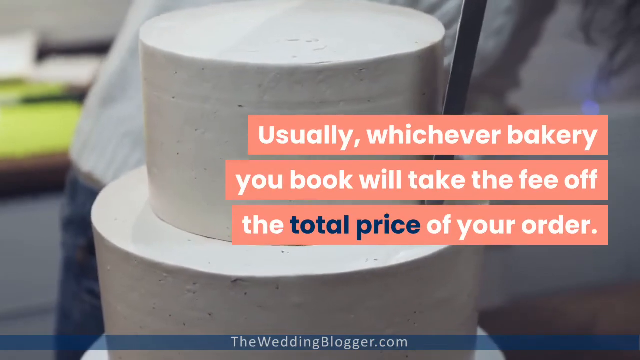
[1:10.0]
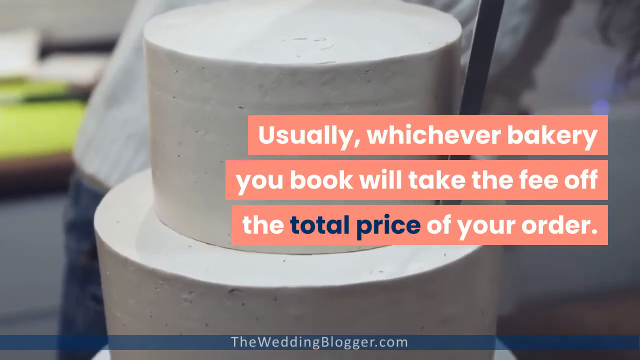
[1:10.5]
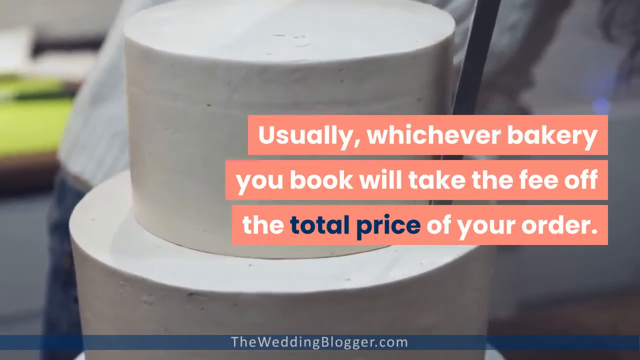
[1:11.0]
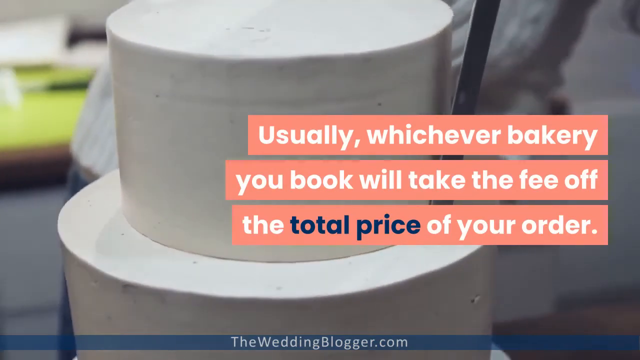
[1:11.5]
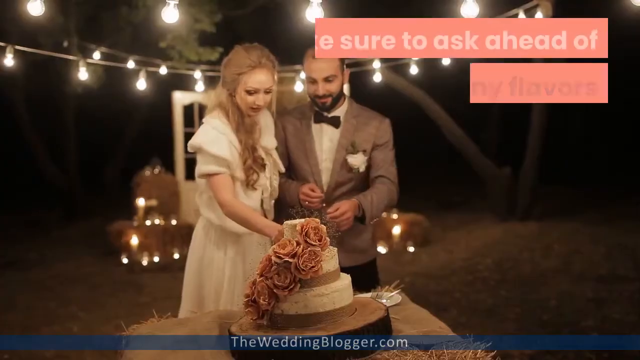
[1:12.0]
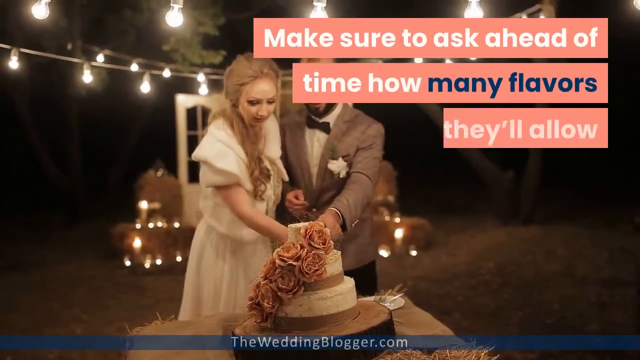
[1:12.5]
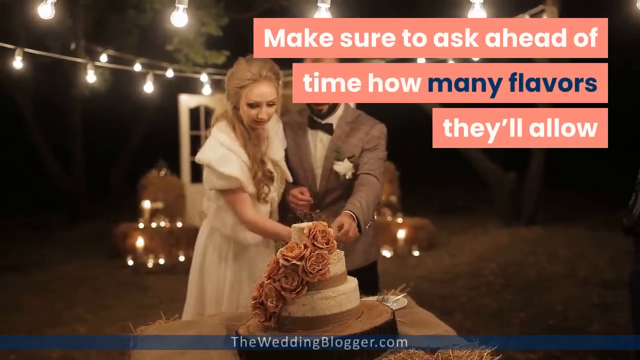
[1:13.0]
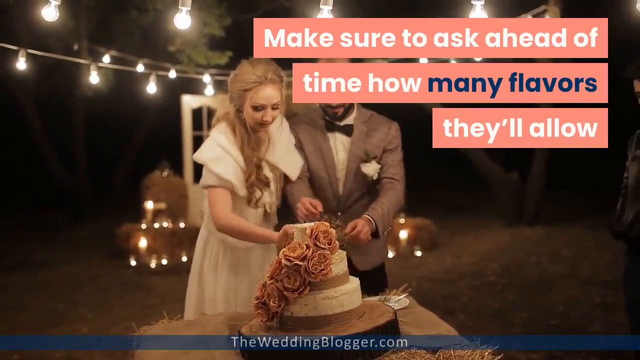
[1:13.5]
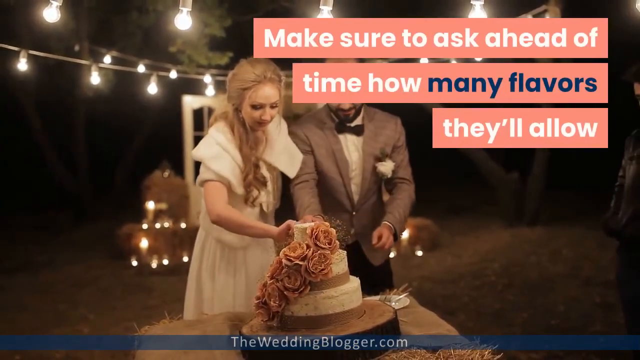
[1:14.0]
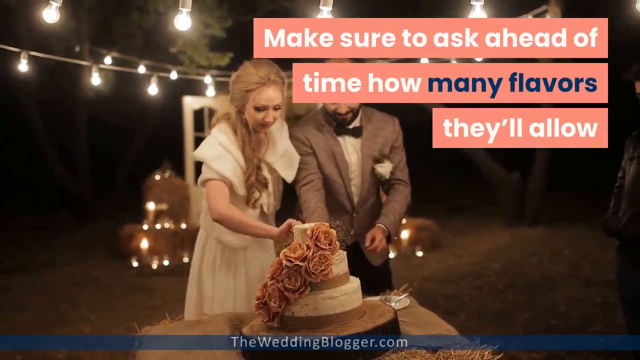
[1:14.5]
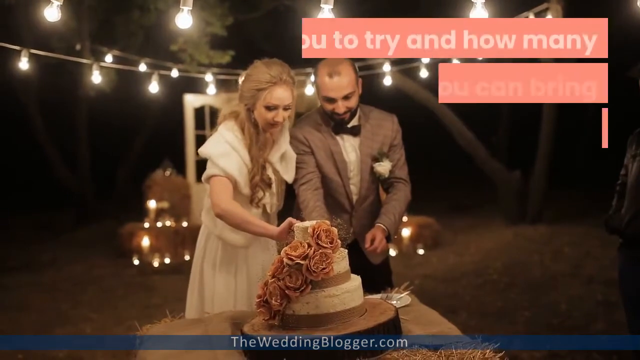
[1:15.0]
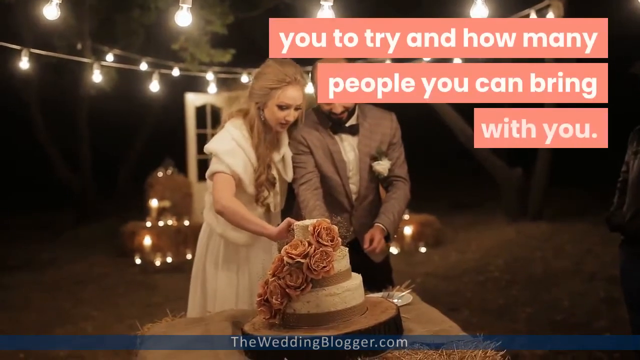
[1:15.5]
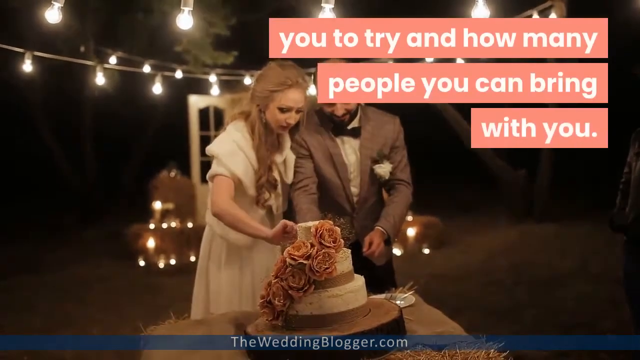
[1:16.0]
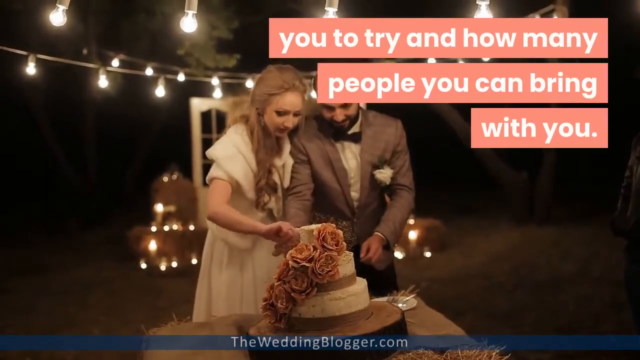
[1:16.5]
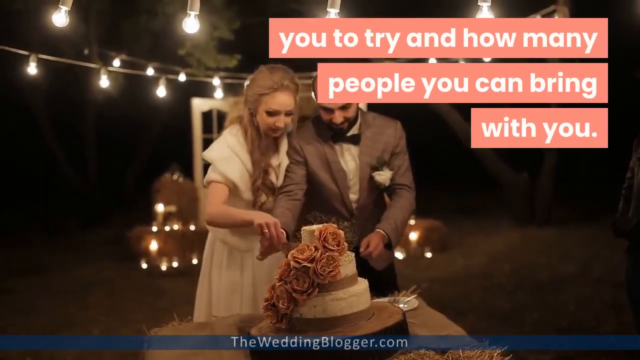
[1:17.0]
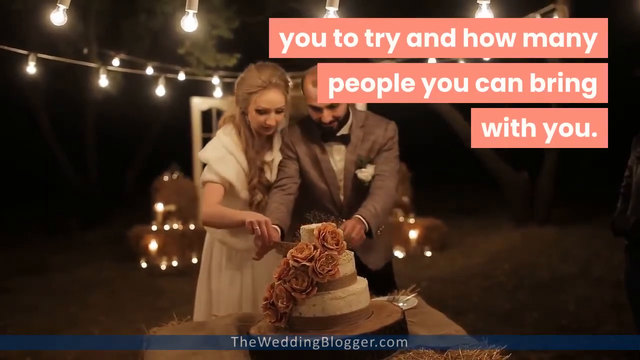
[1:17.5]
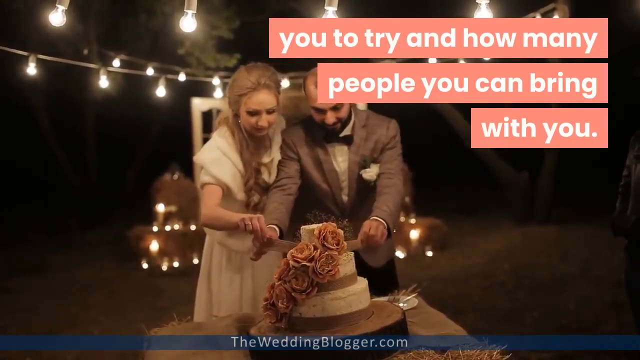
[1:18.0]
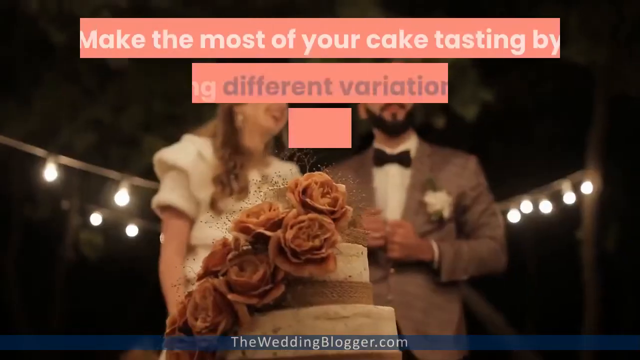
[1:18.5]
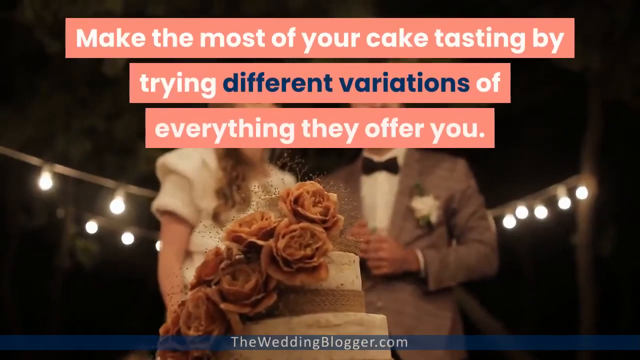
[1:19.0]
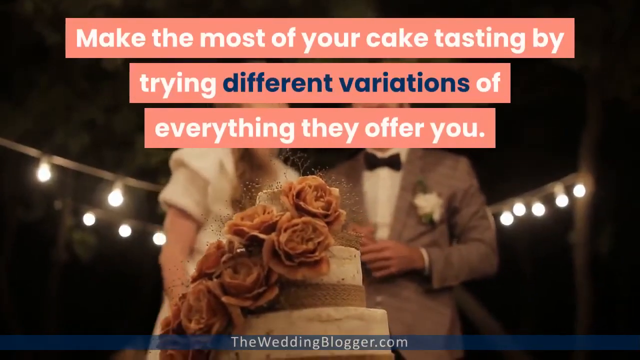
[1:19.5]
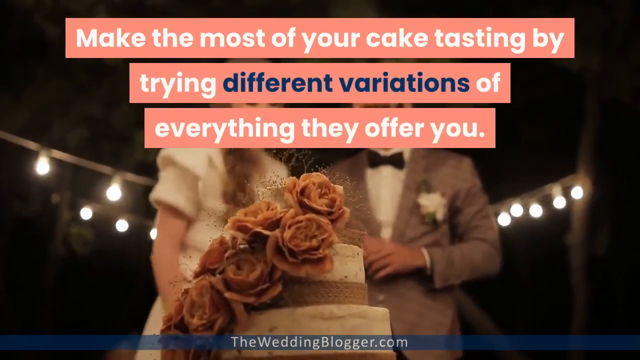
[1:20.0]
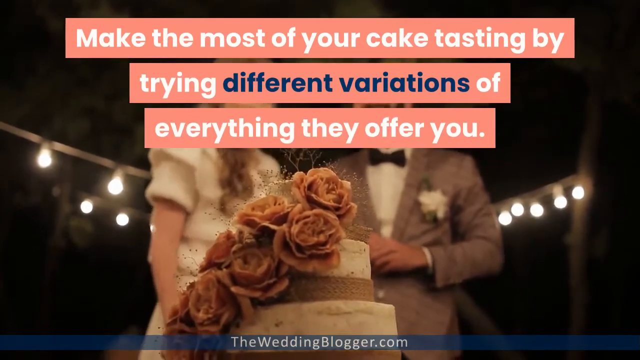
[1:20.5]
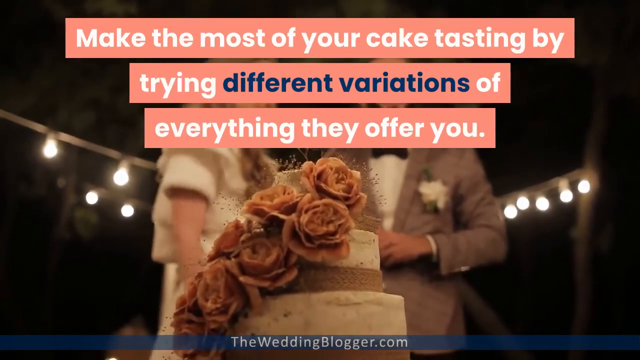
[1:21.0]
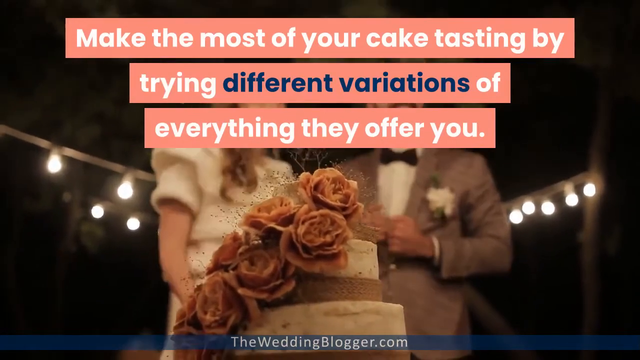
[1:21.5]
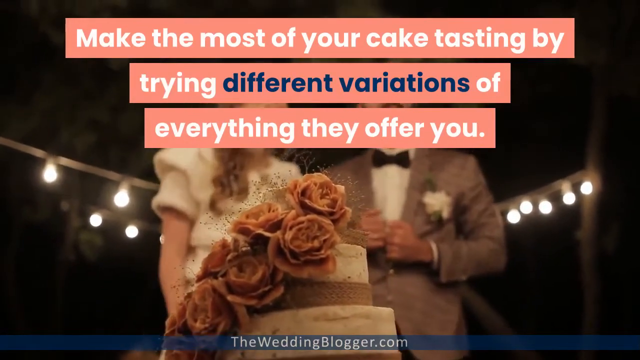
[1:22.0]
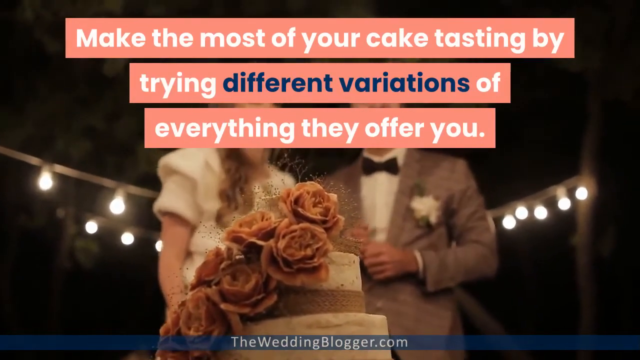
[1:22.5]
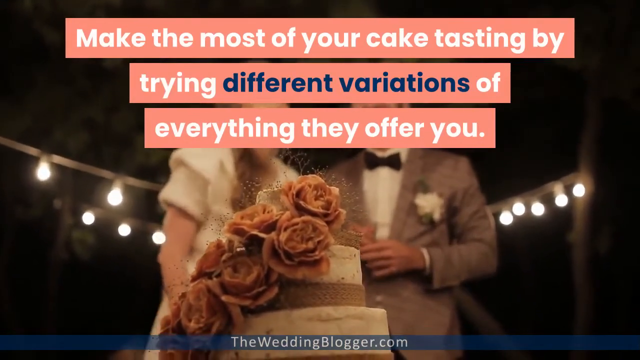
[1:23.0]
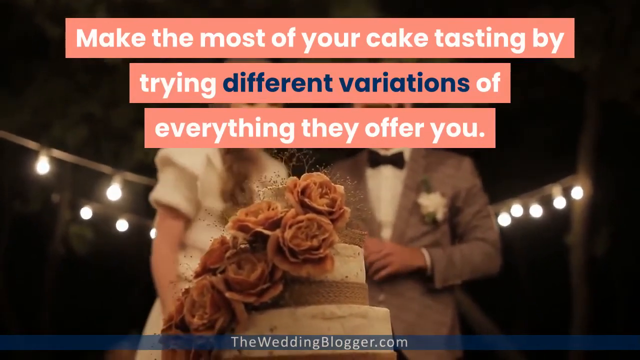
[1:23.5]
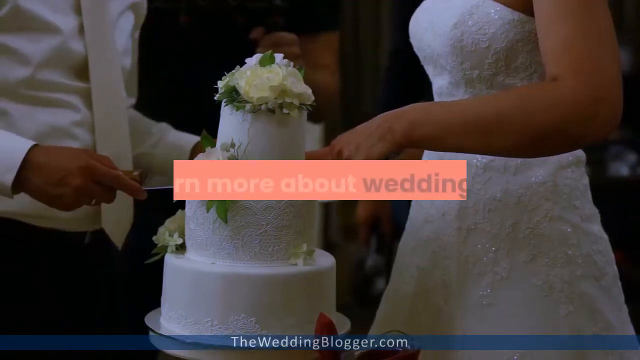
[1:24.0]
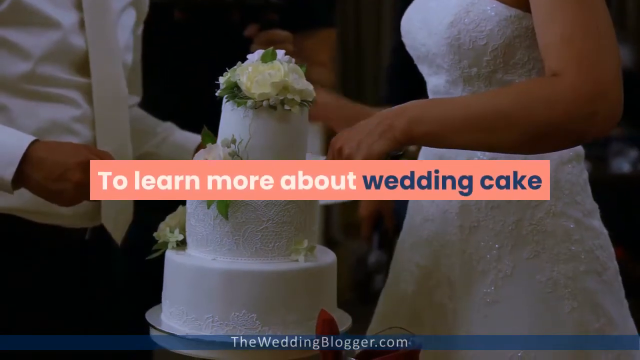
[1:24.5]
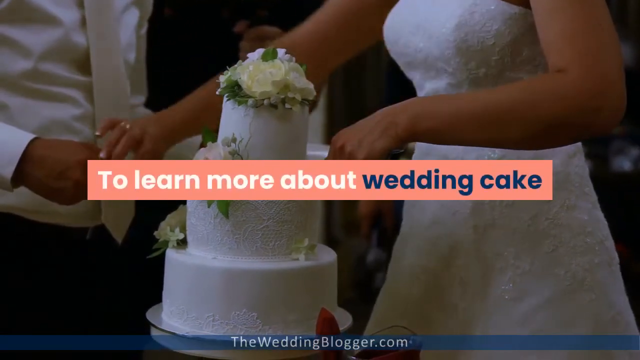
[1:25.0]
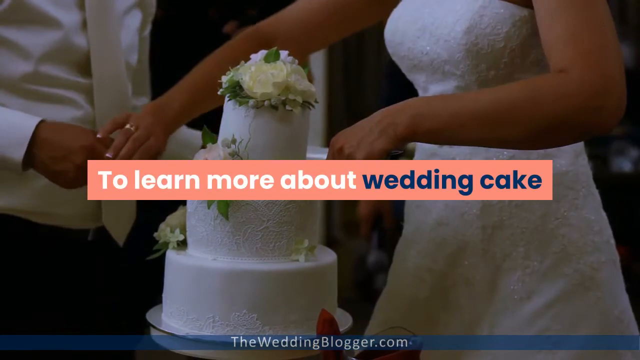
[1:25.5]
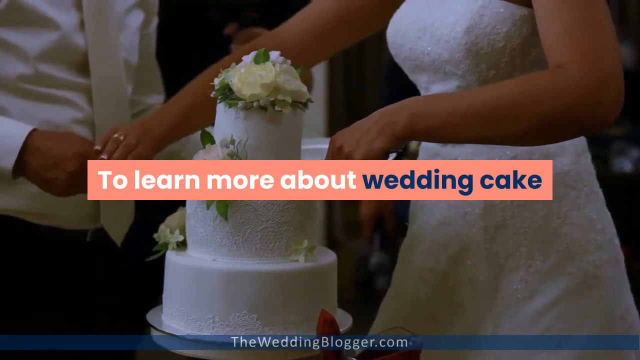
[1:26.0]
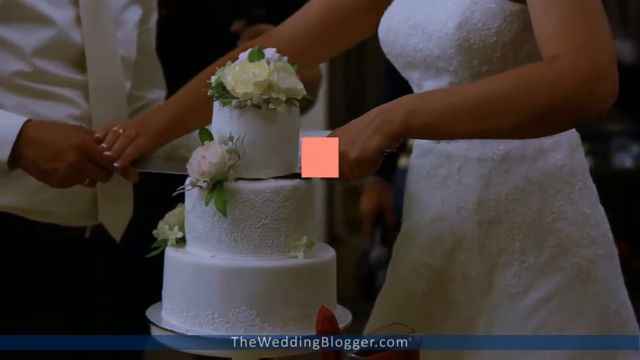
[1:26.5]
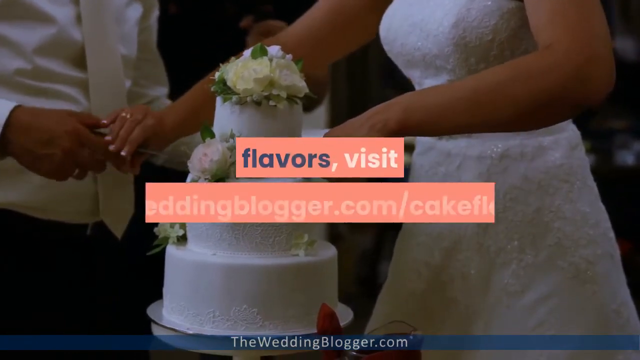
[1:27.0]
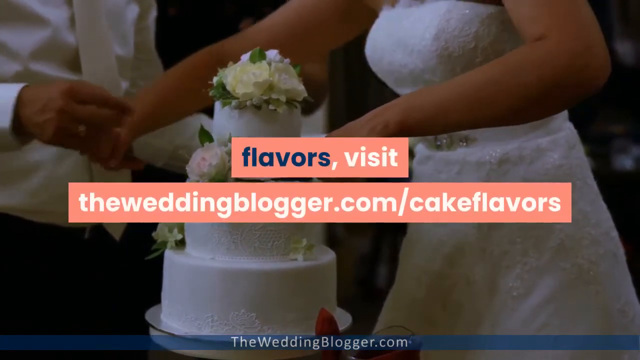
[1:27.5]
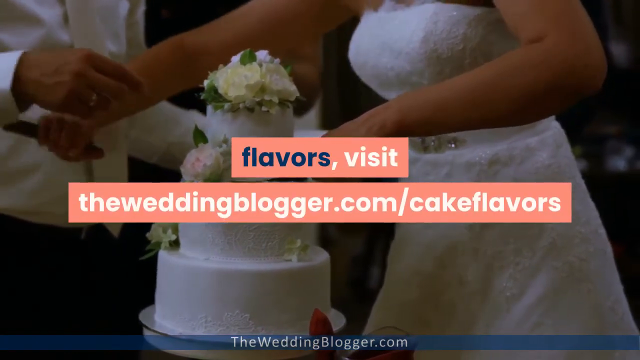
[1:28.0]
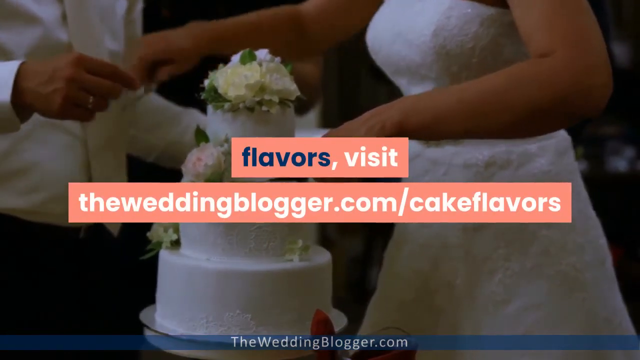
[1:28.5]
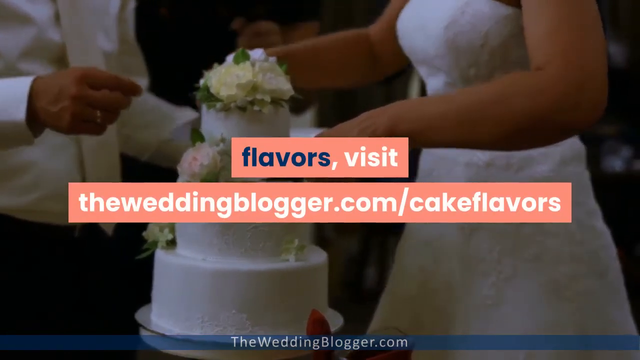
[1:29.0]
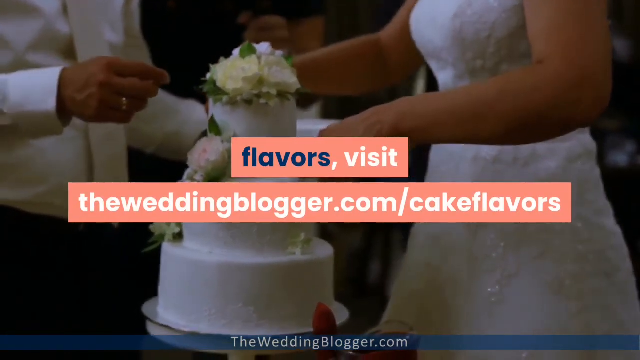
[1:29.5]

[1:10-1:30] Text reads "Every bakery you book will take the fee off the total price of your order." Someone uses a long metal tool to smooth out a two-layer cake, going around it. Text then reads "Make sure to ask ahead of time, how many flavors they'll allow." The scene moves to an exterior setting with hanging lights, where a bride in a white dress and a groom in a gray suit with a black bow tie are cutting into a small three-layer cake with roses, both reaching up to it. Text mentions "how many people you can bring with you," and then reads "Make the most of your cake testing by trying different varieties of everything they offer you," as the couple stands behind the cake. Another couple follows: a woman in a white wedding dress on the right and a man wearing a white dress shirt, dark pants and a white tie, together cutting a small white three-layer cake. The text reads "To learn more about wedding cake flavors visit: theweddingblogger.com/cakeflavors."